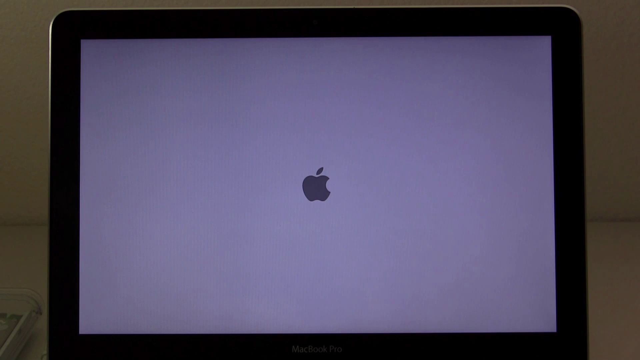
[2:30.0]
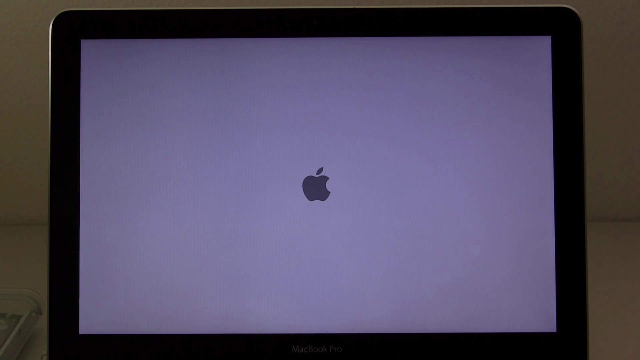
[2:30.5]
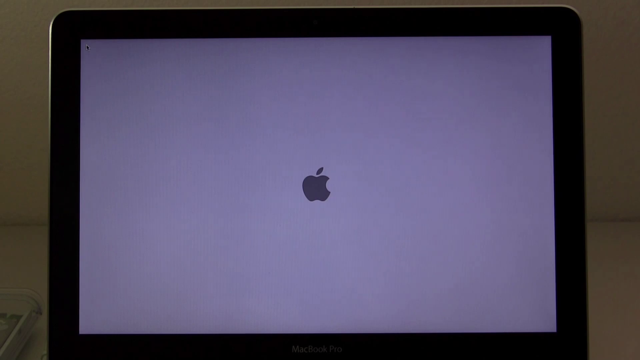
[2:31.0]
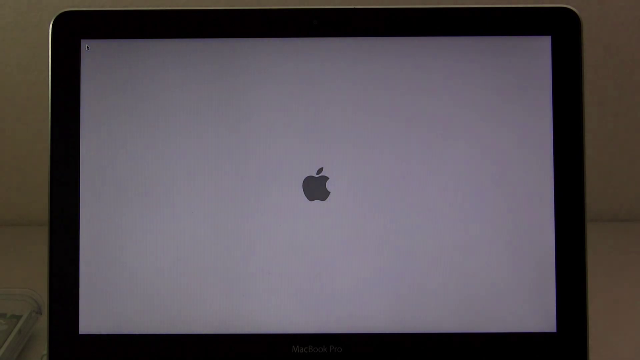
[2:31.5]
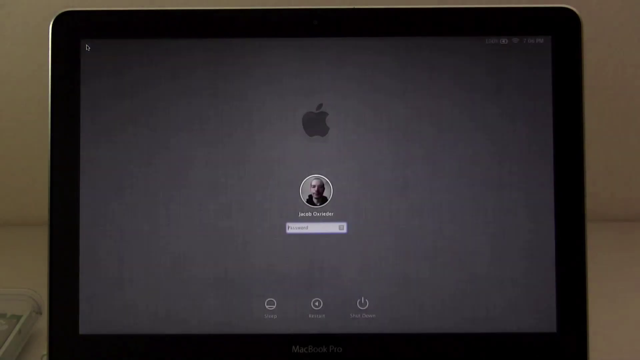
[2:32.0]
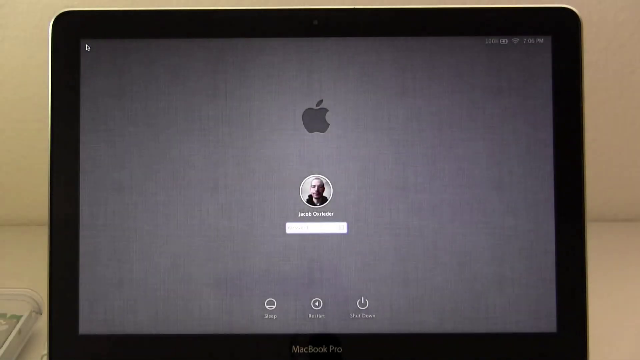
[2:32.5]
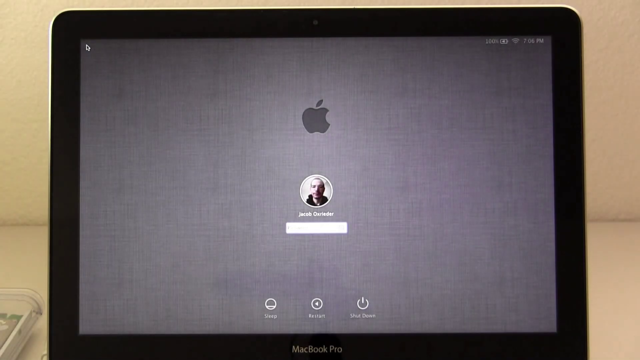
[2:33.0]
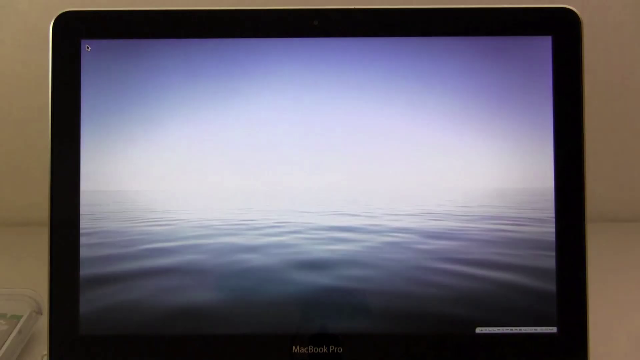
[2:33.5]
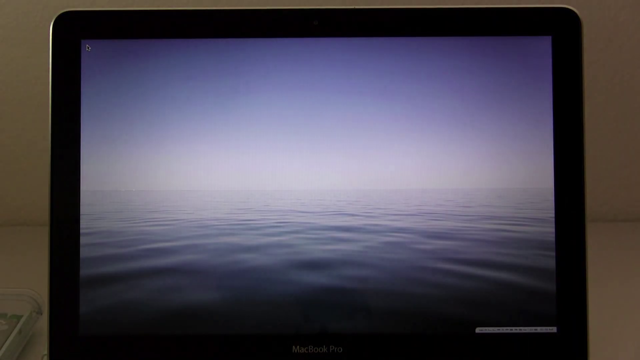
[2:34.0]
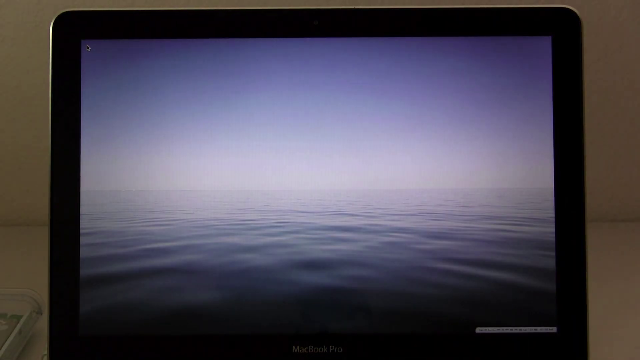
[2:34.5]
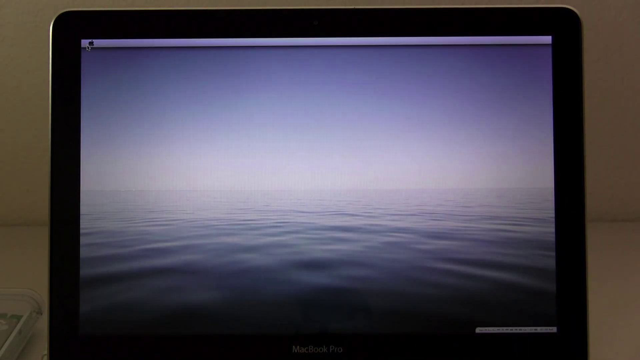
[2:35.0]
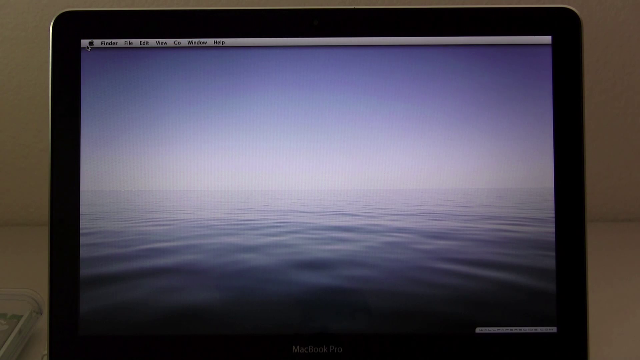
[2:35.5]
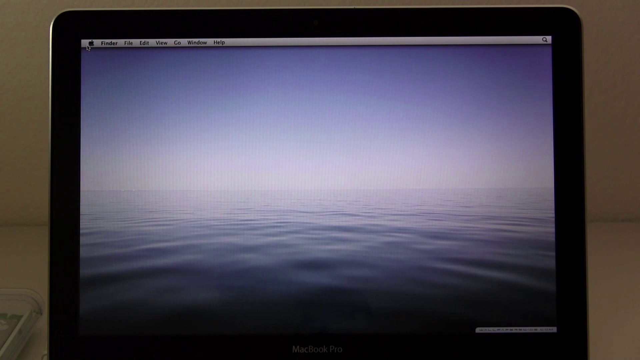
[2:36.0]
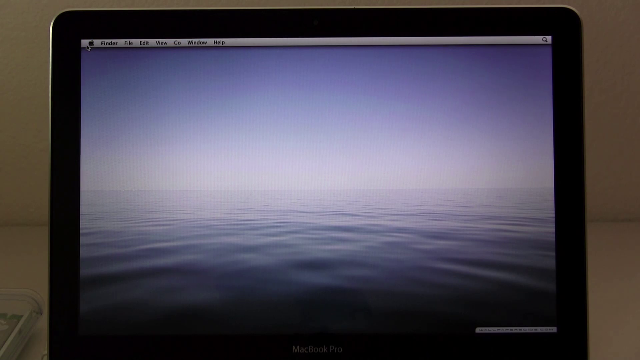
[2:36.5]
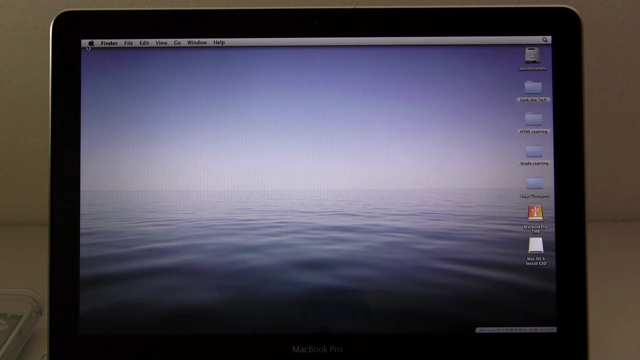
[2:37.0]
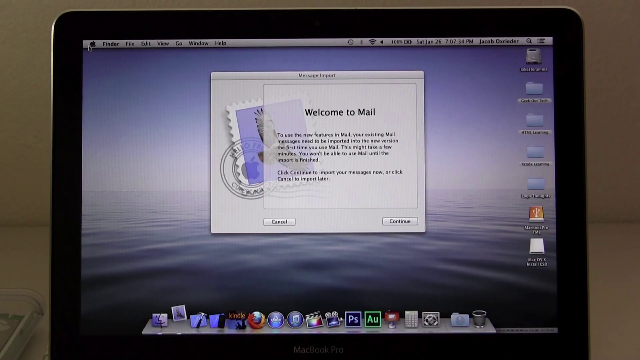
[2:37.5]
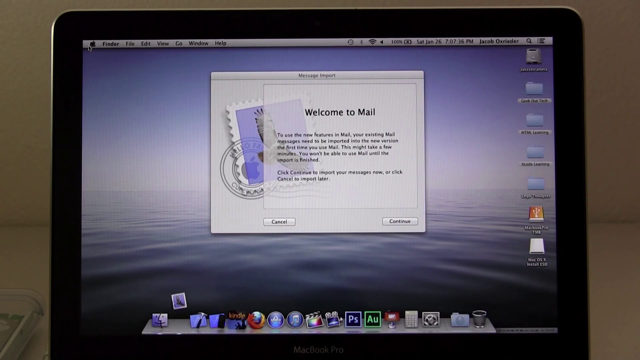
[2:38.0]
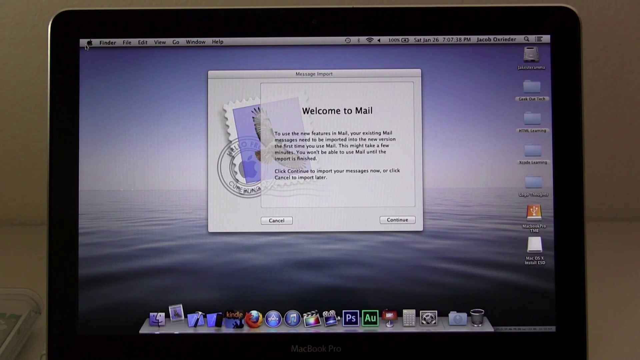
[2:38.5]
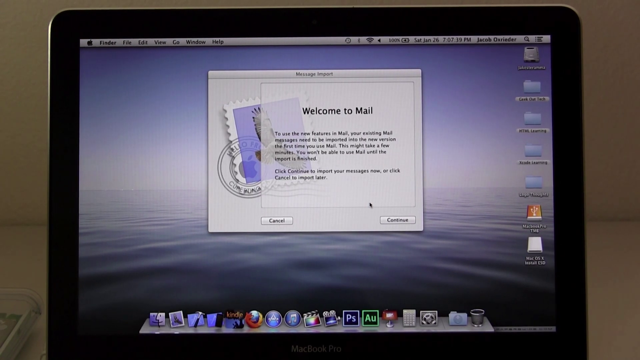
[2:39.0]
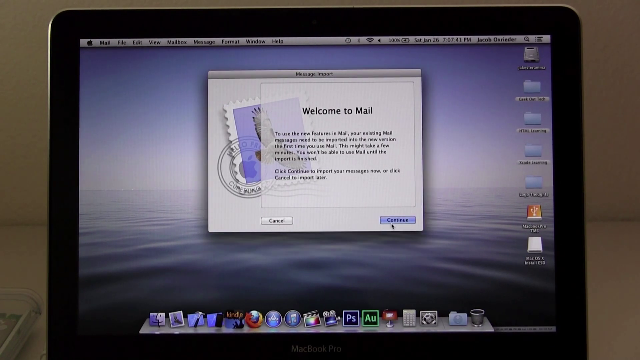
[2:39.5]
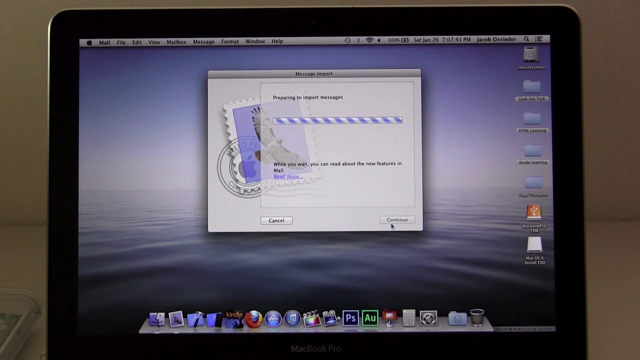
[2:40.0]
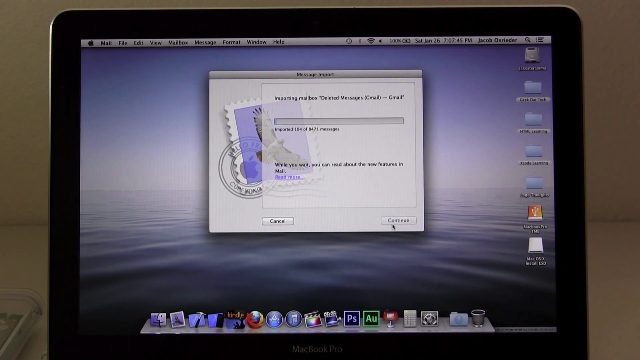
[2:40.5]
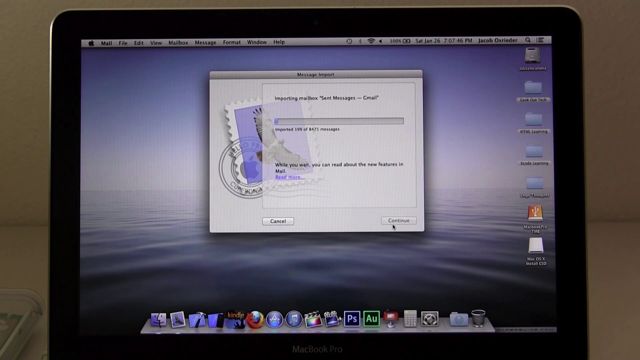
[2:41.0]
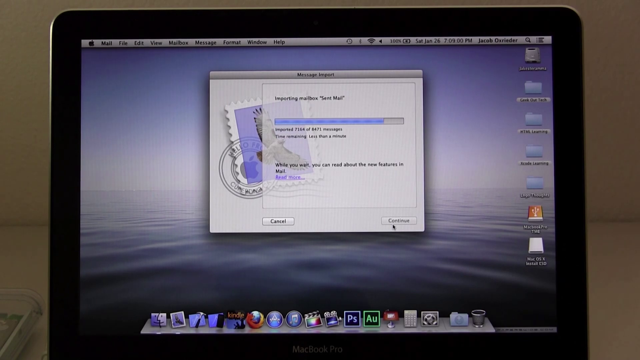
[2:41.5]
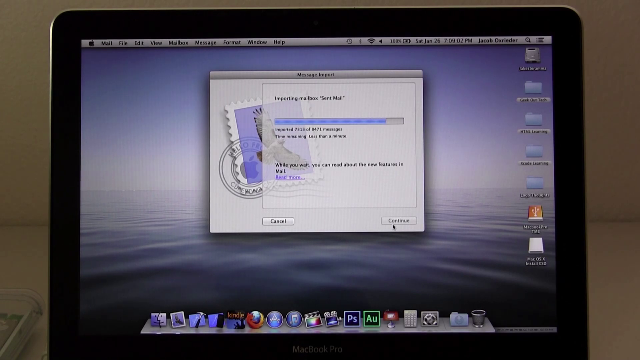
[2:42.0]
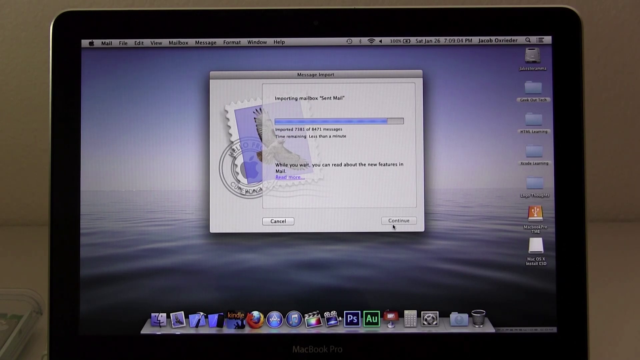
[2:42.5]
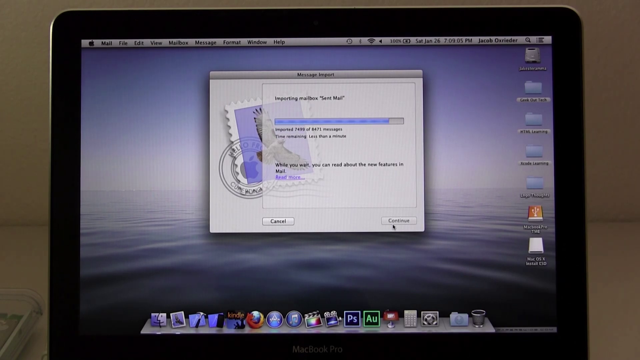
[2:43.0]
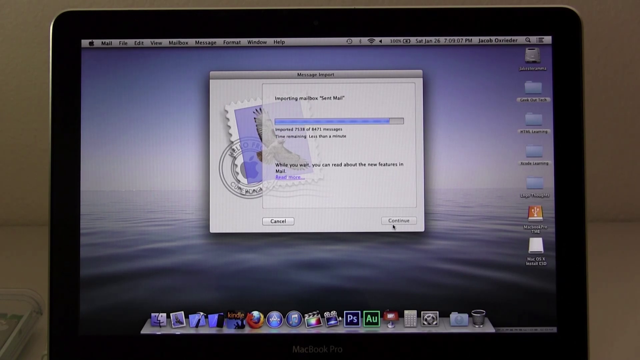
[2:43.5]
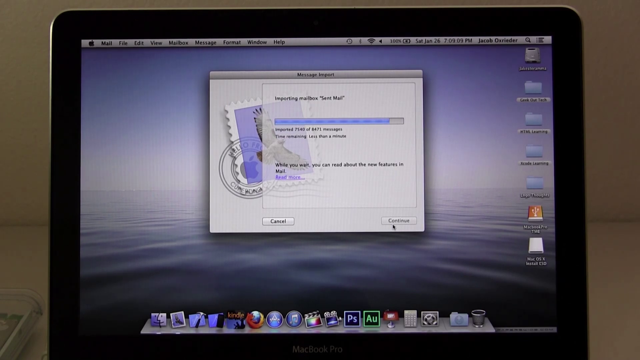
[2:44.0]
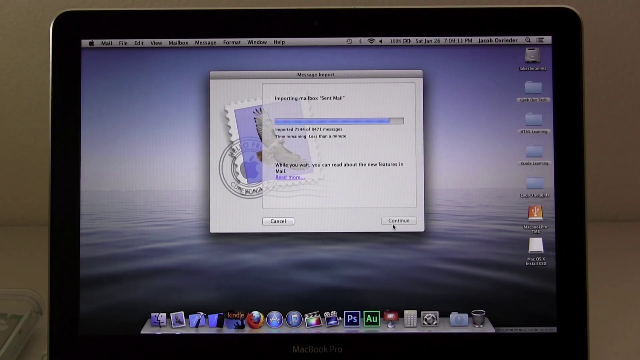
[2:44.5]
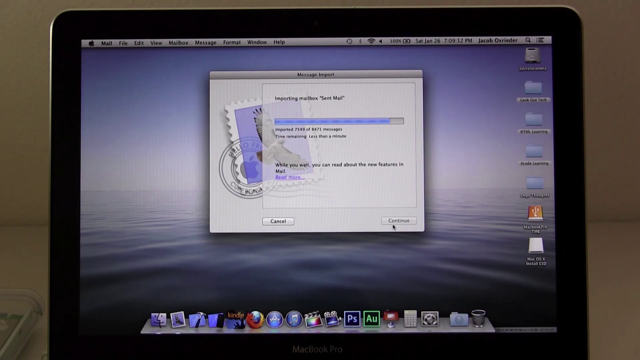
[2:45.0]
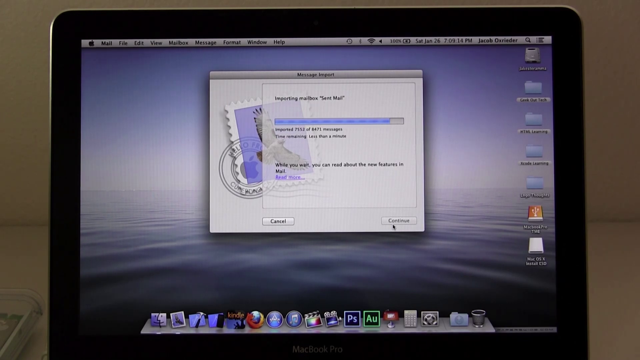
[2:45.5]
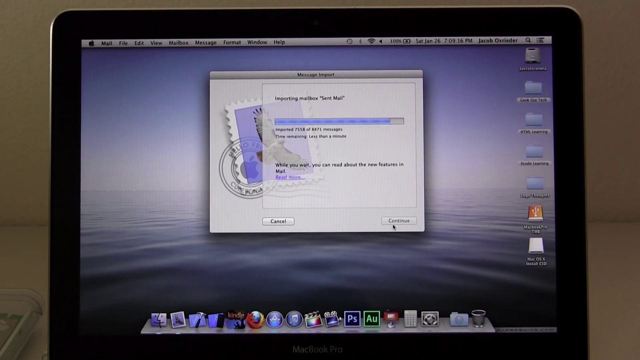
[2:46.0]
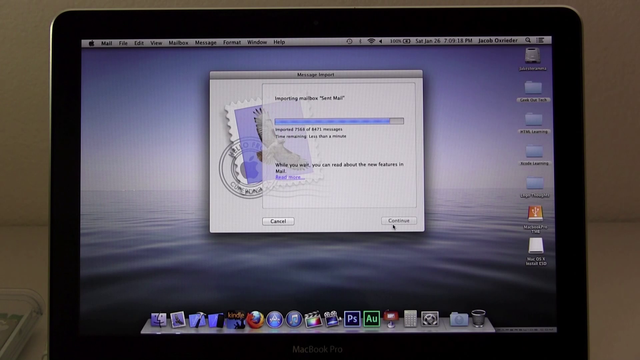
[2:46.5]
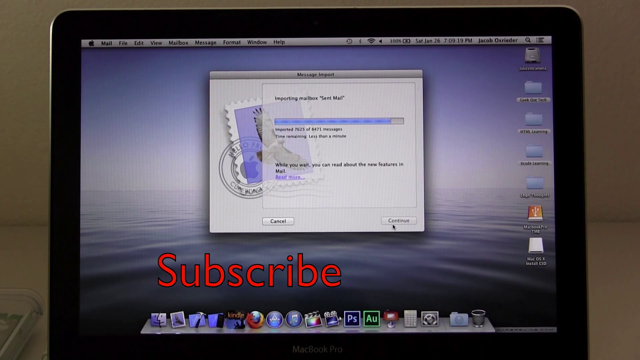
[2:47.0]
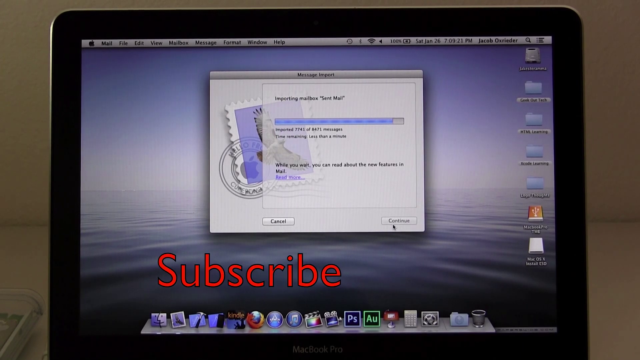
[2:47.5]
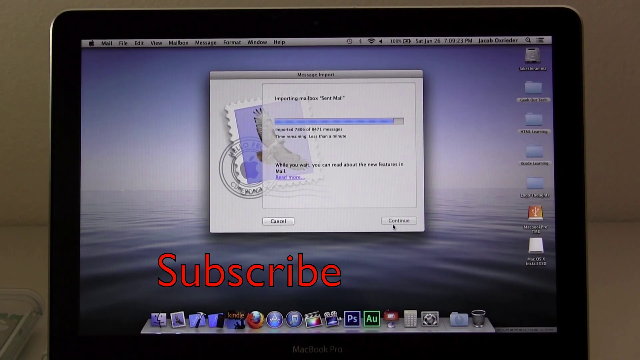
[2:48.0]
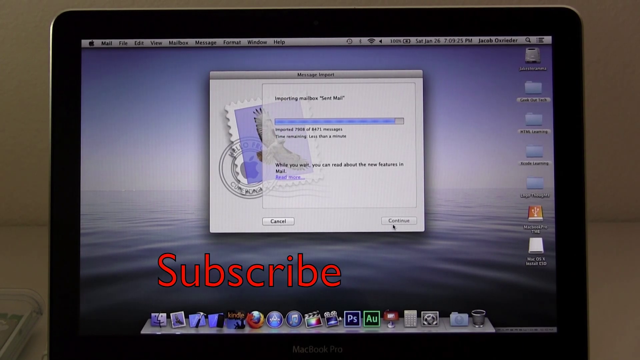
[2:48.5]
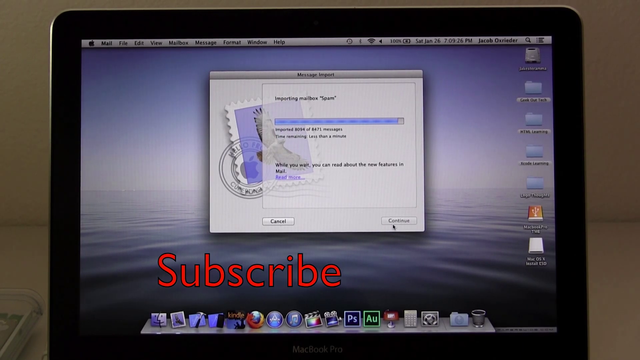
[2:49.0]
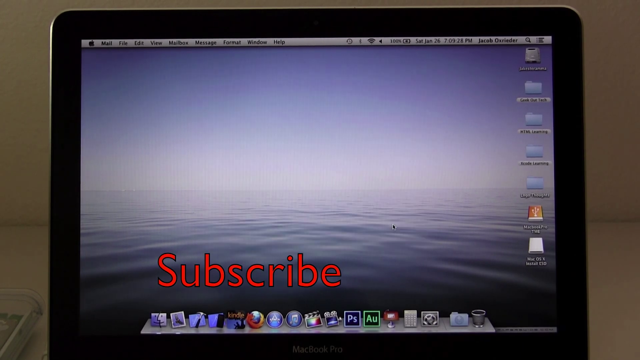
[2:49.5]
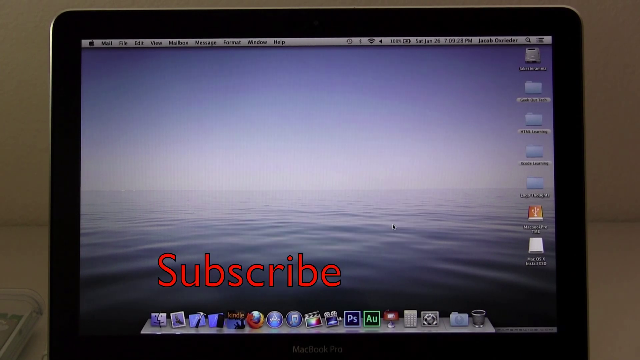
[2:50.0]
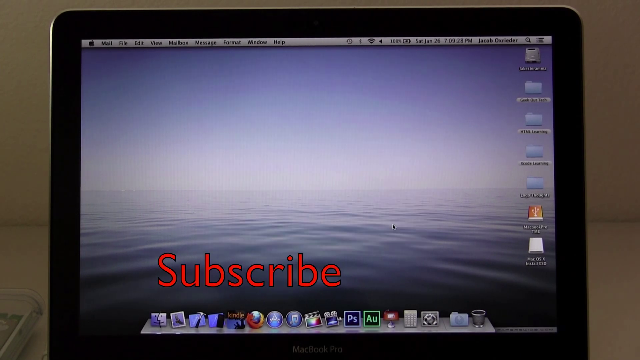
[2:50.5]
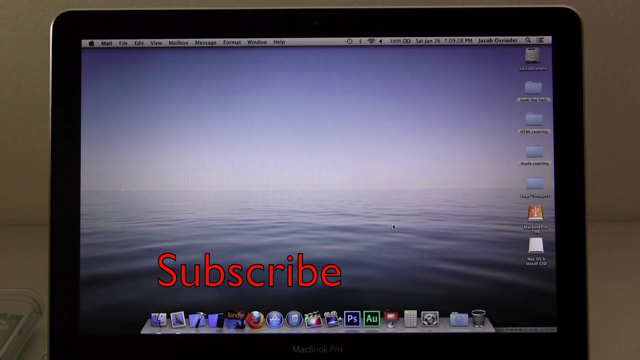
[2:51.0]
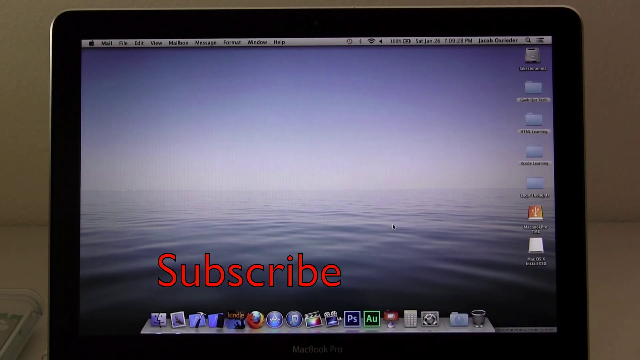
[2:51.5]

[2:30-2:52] The computer screen is white with the Apple symbol in the middle, apparently restarting. The person logs back in, and the desktop background looks like calm water with a sun rising or setting; it is very bright, and the sky above is blue. The person apparently clicks on something that brings up "welcome to mail" and is getting ready to click continue. A blue progress bar moves across as it updates, and the screen asks whether to subscribe to something.